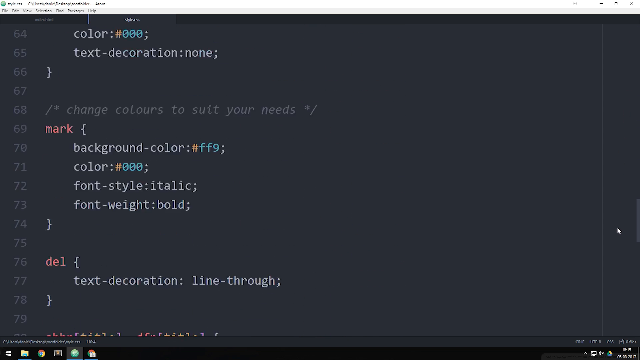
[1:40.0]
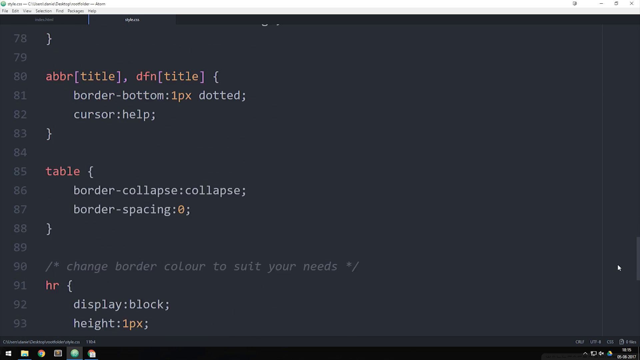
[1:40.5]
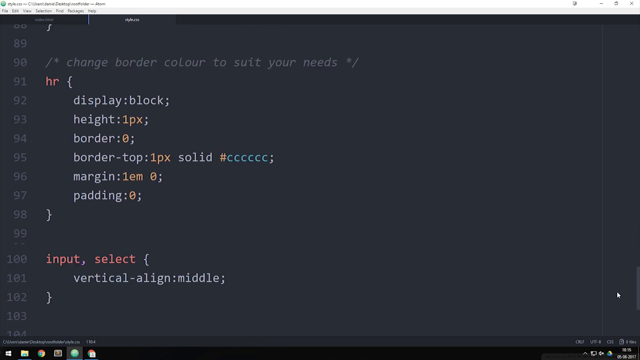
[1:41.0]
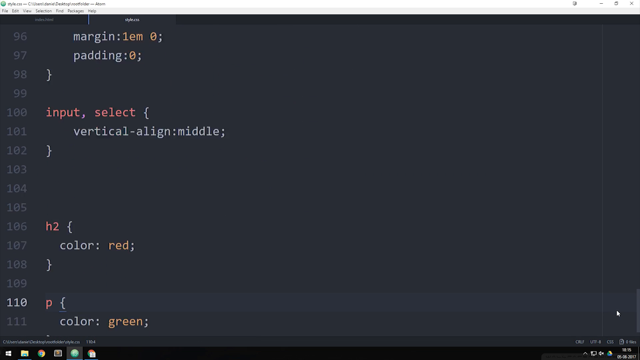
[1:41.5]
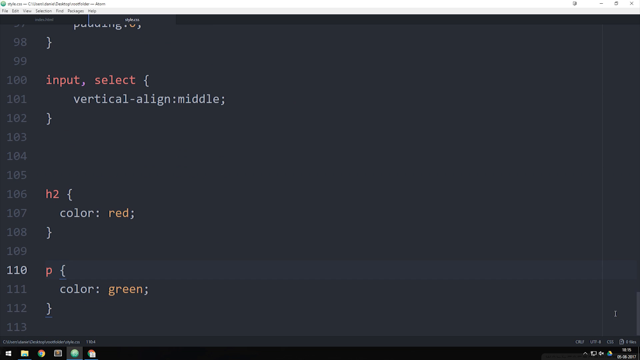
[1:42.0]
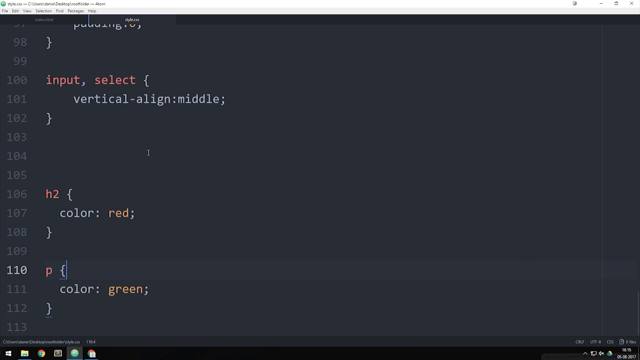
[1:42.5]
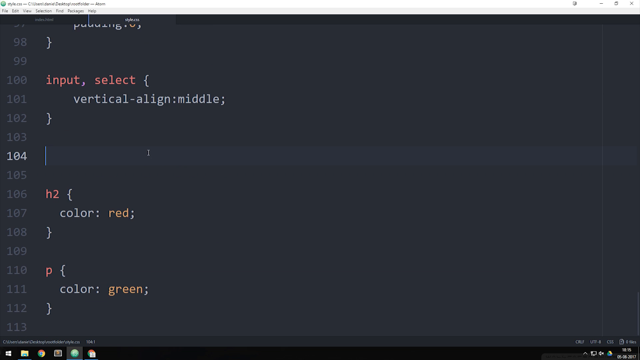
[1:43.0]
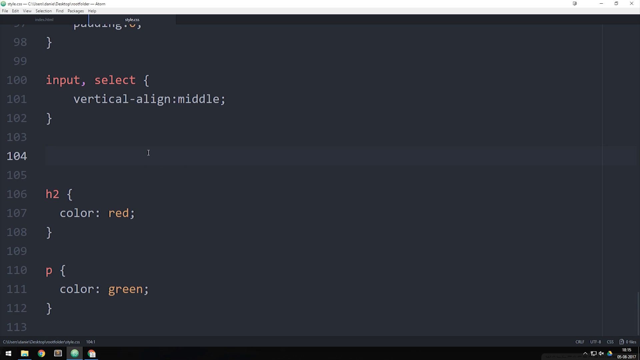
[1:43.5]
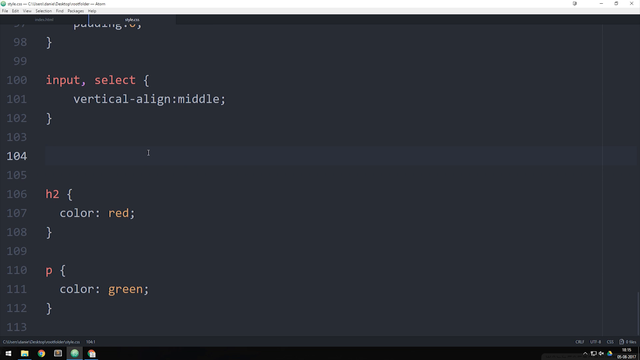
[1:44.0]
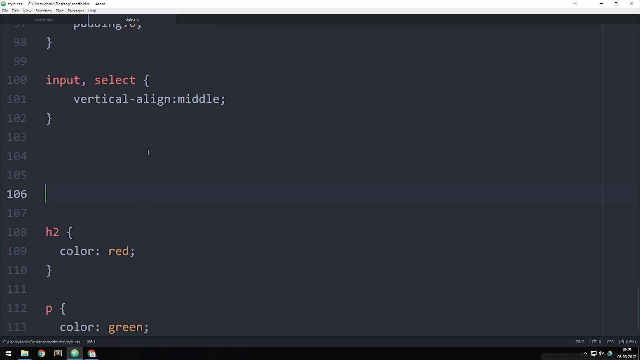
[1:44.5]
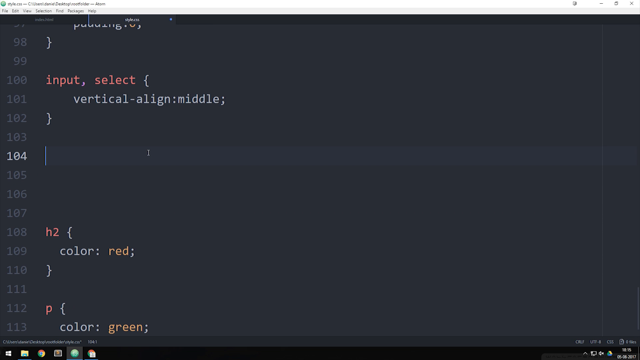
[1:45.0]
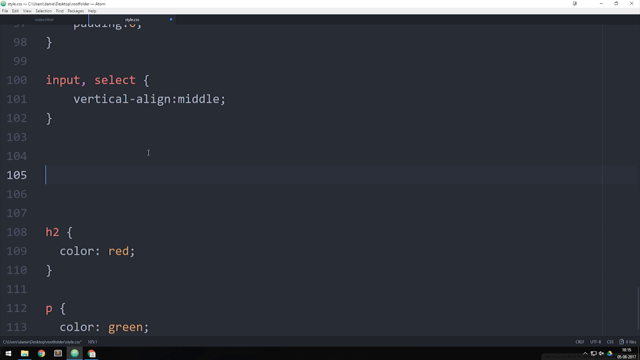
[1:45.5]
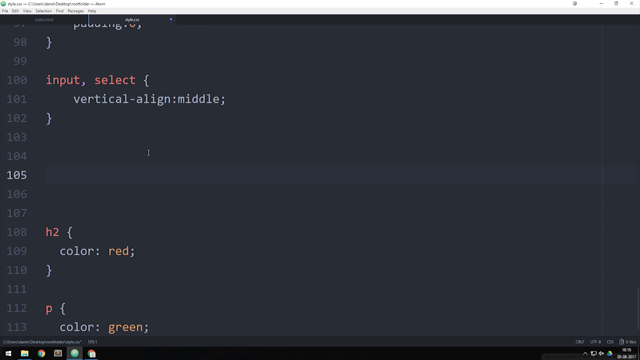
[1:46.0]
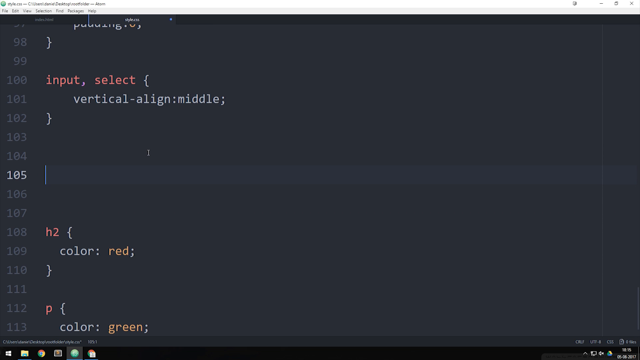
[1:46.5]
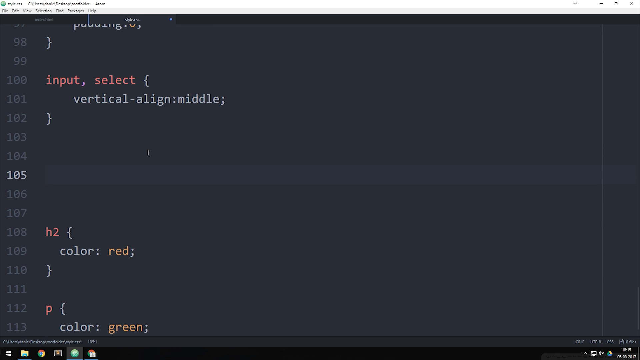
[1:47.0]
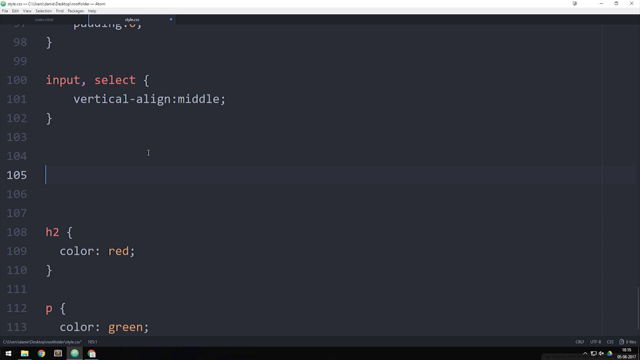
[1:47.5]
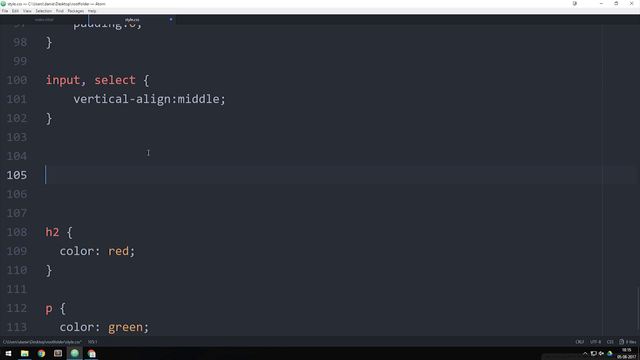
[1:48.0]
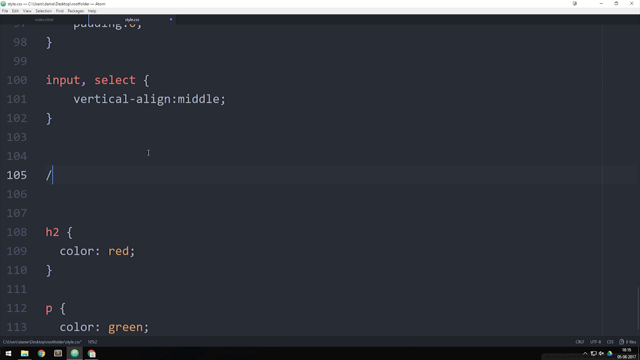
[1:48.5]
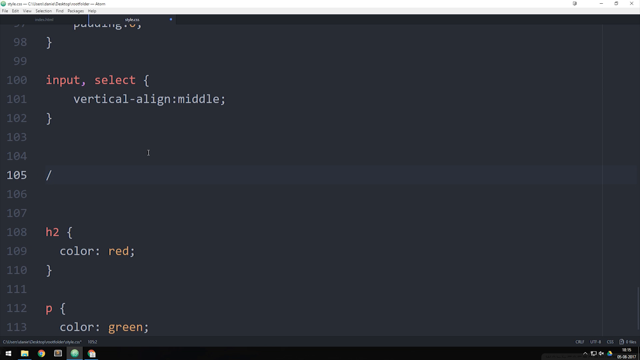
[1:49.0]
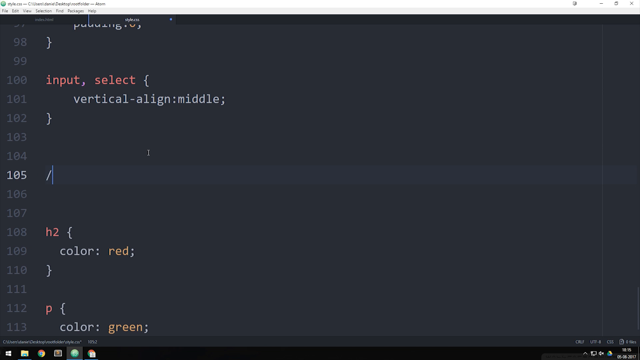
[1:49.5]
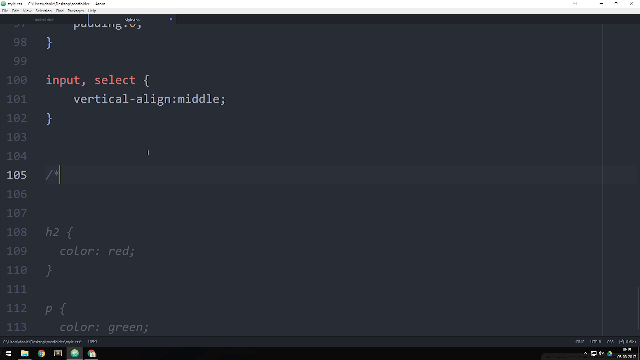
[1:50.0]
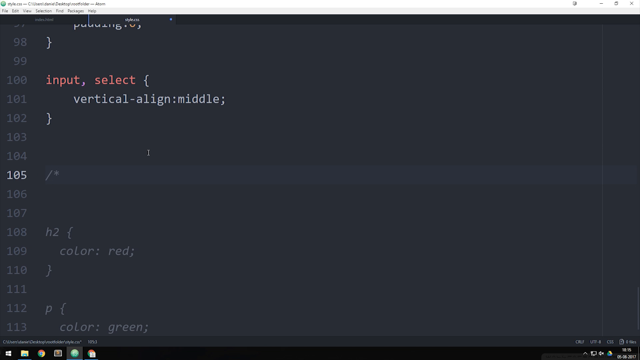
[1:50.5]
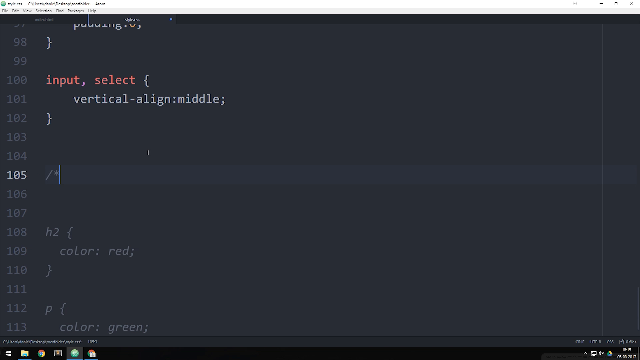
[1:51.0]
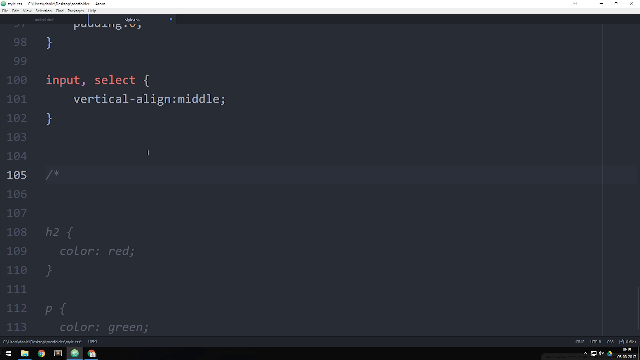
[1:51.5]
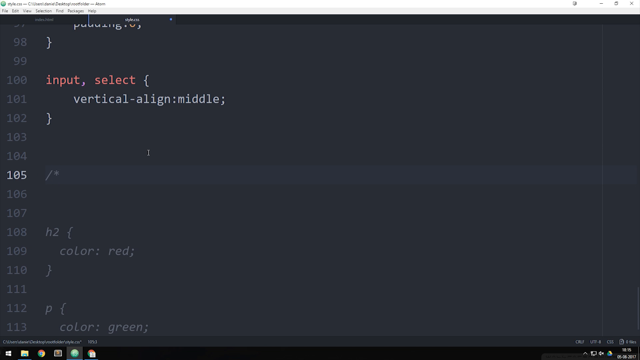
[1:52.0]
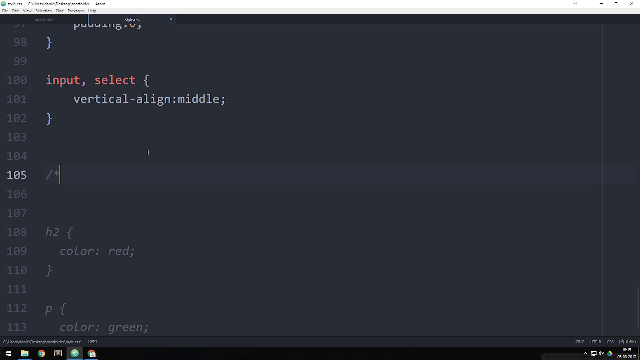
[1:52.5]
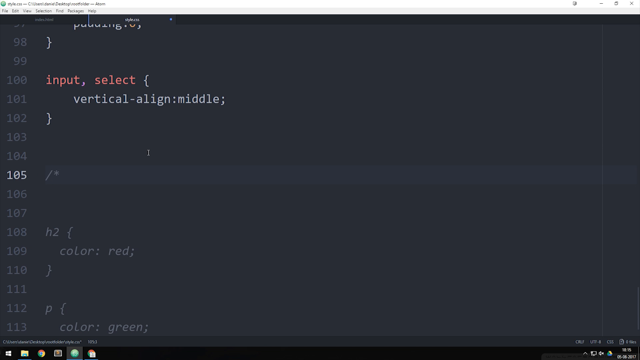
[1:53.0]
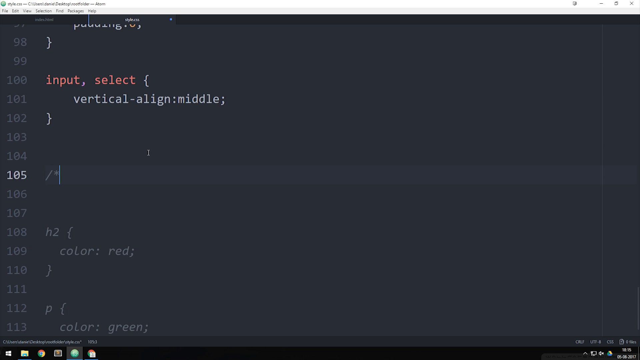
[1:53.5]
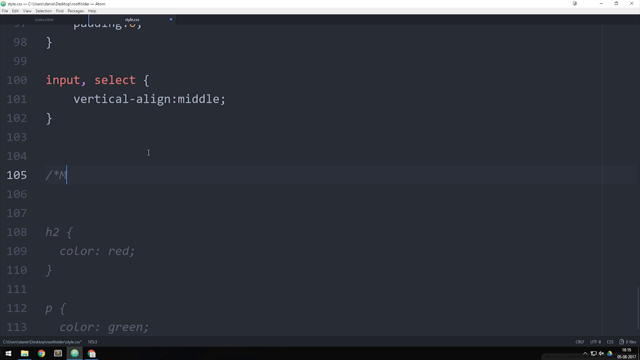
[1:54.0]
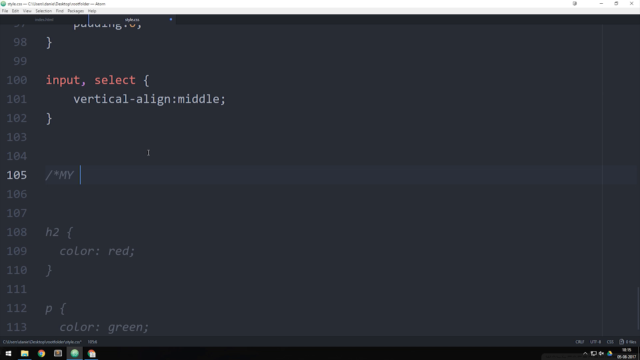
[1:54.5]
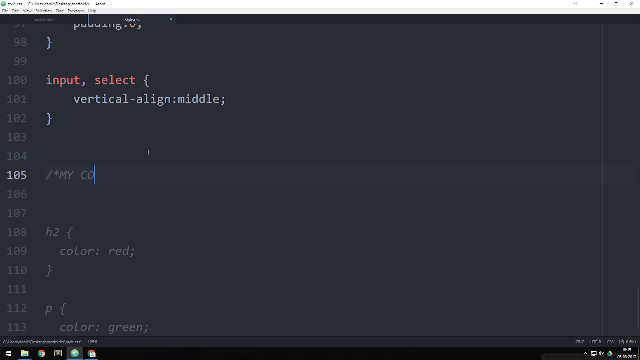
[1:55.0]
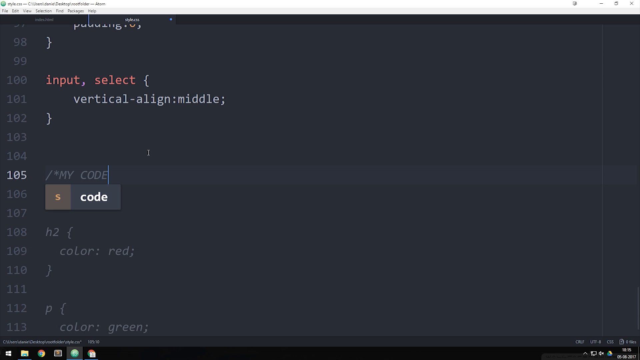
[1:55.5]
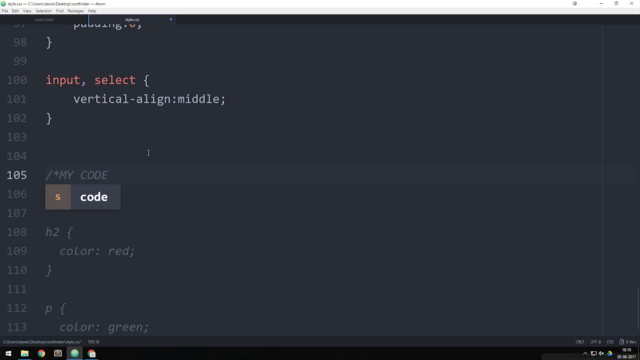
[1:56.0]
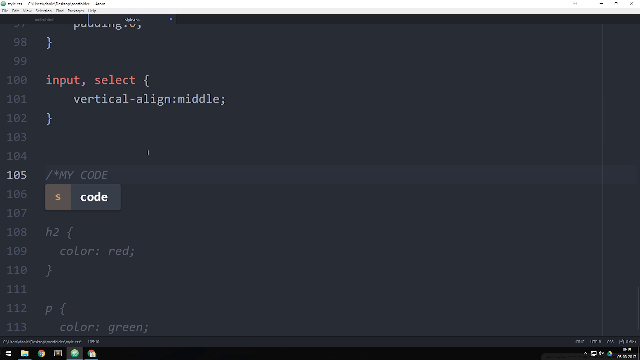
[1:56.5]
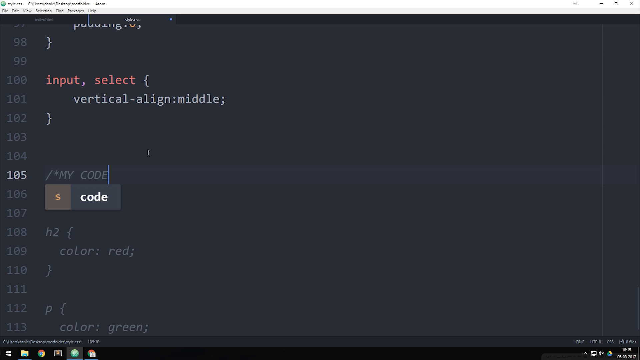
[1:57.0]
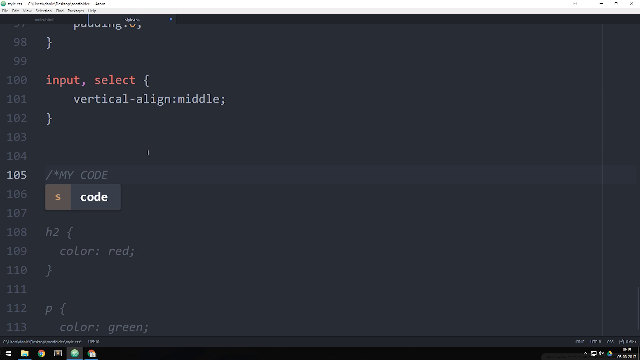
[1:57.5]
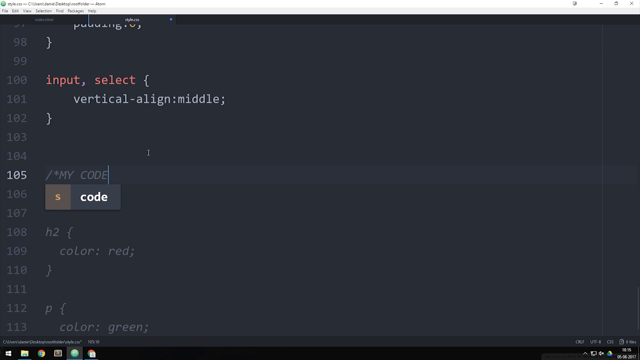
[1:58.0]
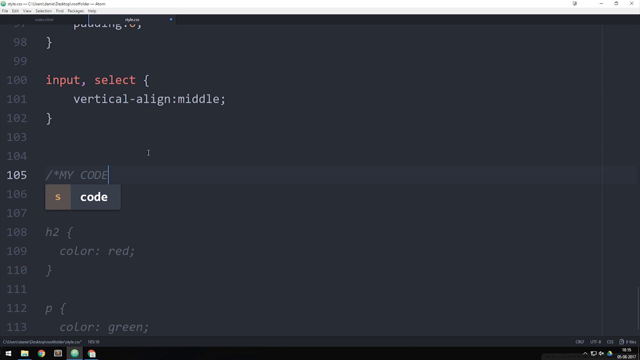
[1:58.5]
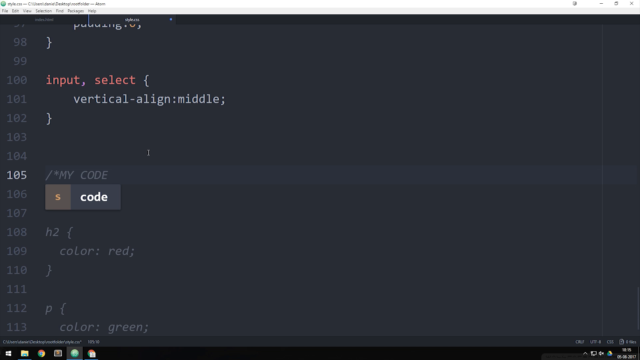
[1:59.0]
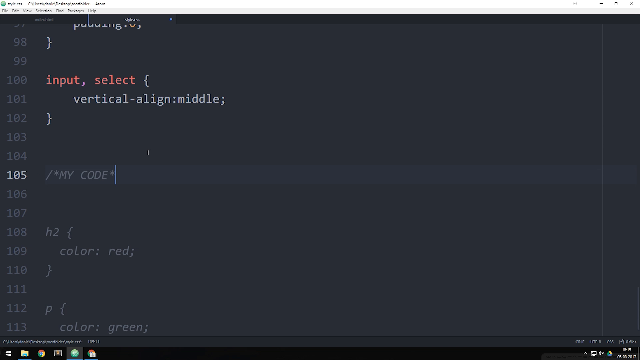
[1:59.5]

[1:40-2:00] HTML code appears on a black background, running from line 64 to about line 77, with a color variable, text variable, background color, font and font weight. The entries include color "#000", text decoration none, background "ff9", color "#000", font style italic, font weight bold and text decoration line through. The person scrolls down, looking at the different codes for a second, then highlights line 104, then 105 and 106, and goes back to 105, where the cursor blinks for a second. They type a backslash and an asterisk, the cursor ticks there for a while, and then they type "my code". Once "my code" is typed, a rectangle appears right underneath it with an S on the left side and the word "code" on the right side. They end the line with an asterisk.